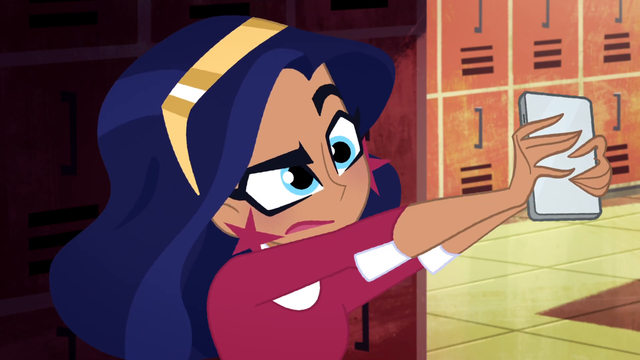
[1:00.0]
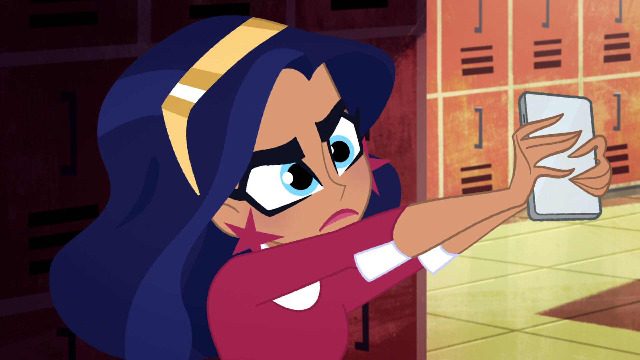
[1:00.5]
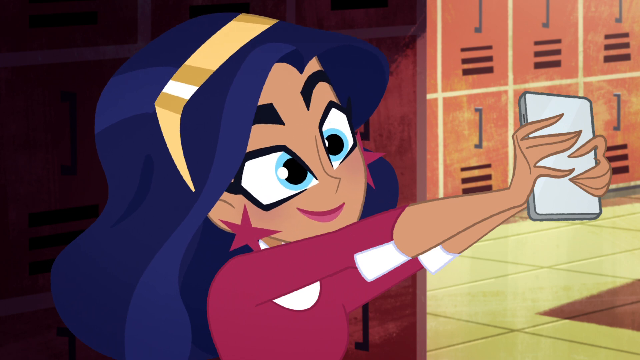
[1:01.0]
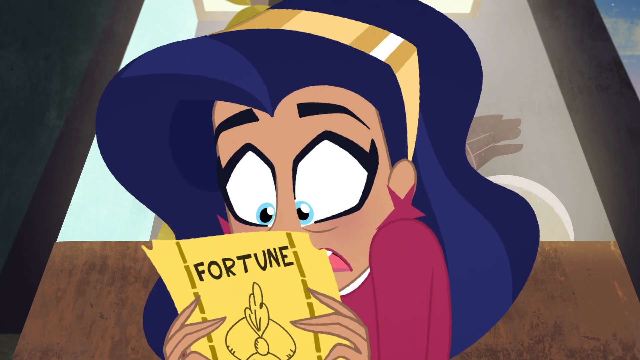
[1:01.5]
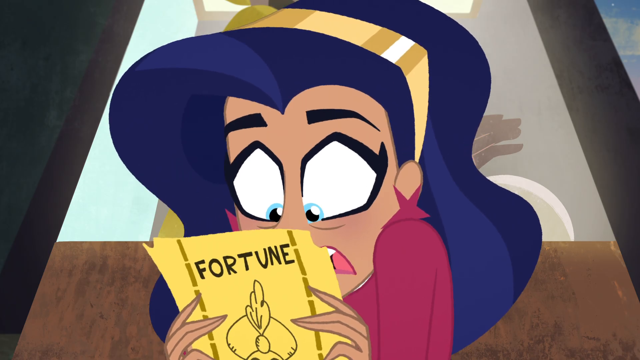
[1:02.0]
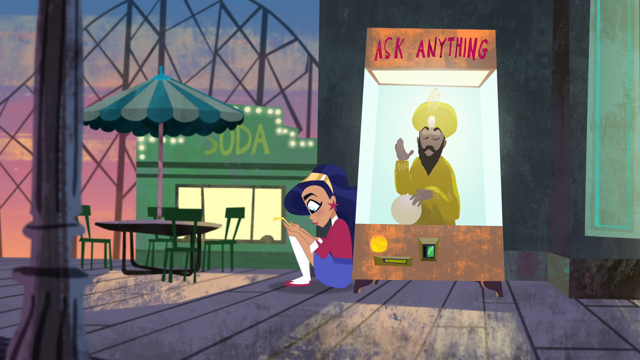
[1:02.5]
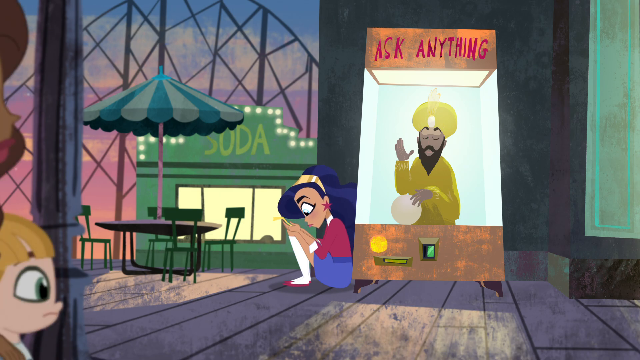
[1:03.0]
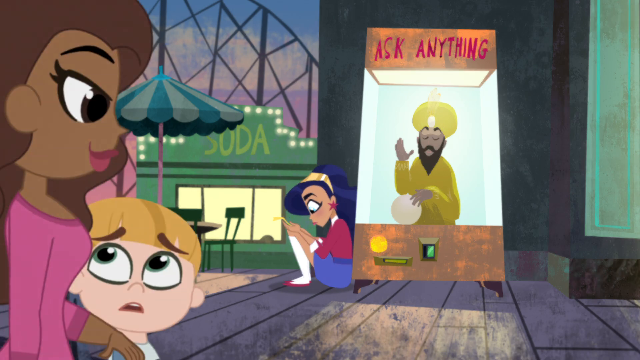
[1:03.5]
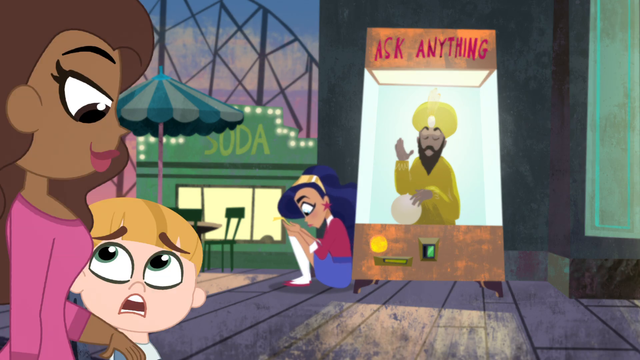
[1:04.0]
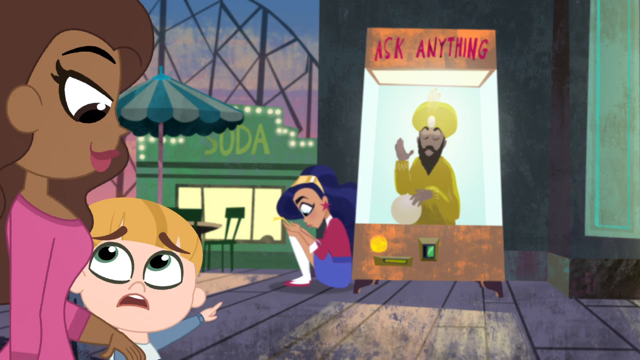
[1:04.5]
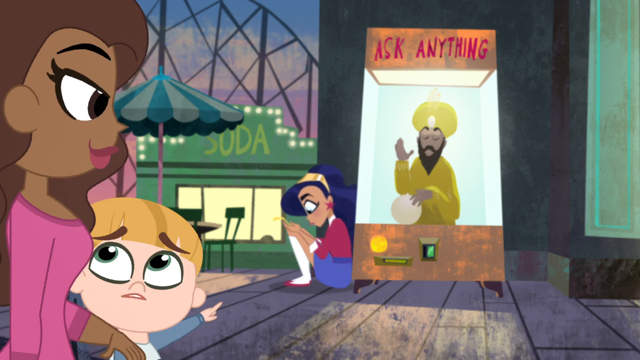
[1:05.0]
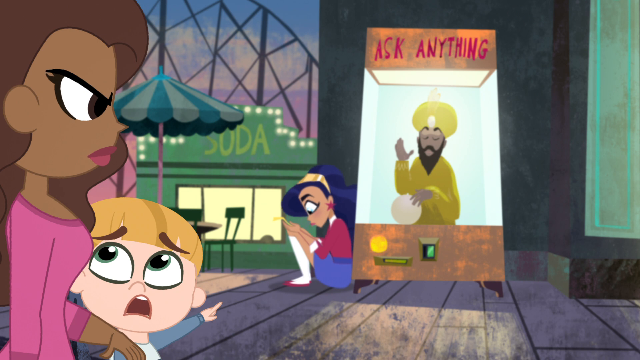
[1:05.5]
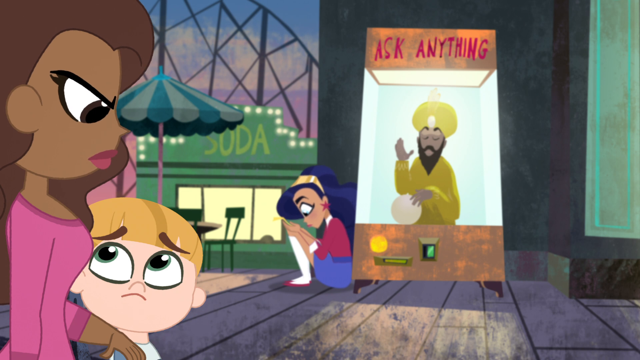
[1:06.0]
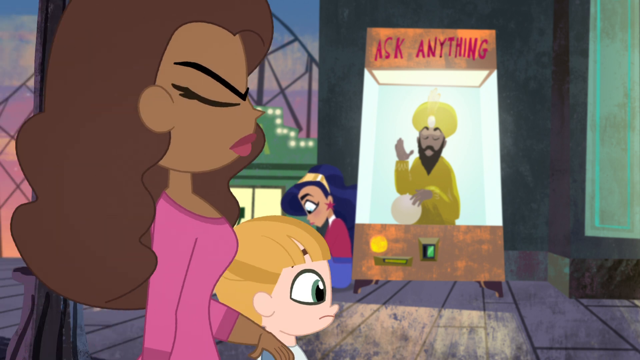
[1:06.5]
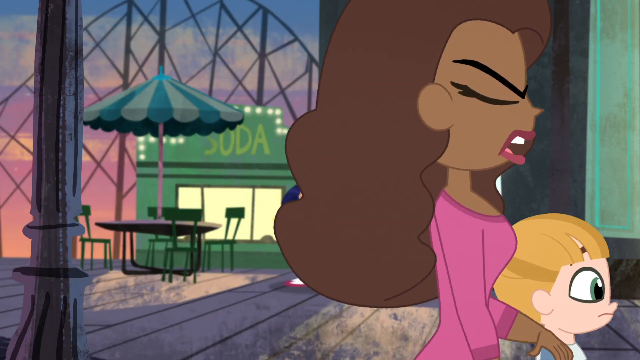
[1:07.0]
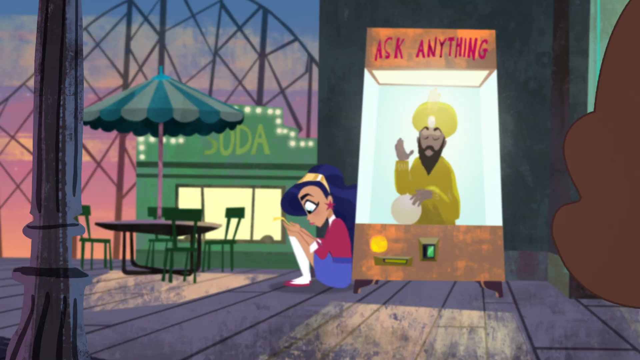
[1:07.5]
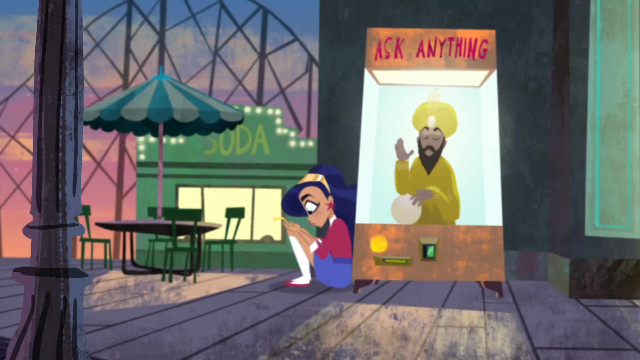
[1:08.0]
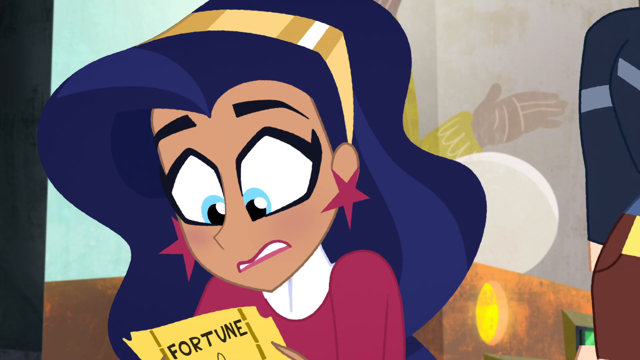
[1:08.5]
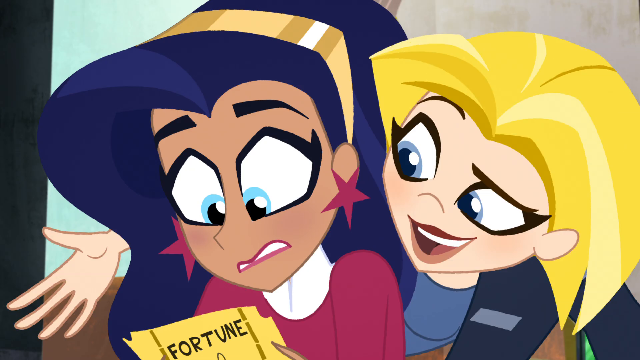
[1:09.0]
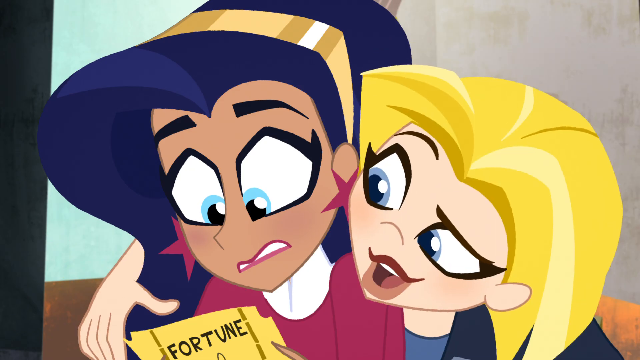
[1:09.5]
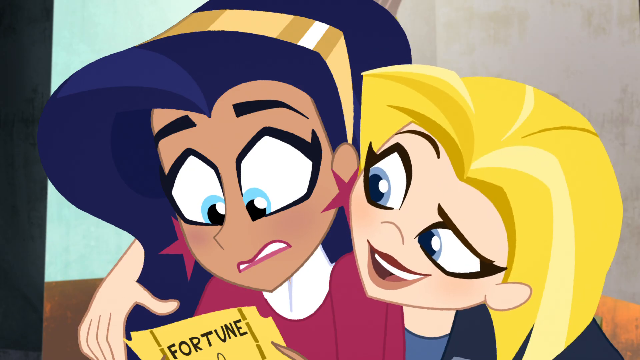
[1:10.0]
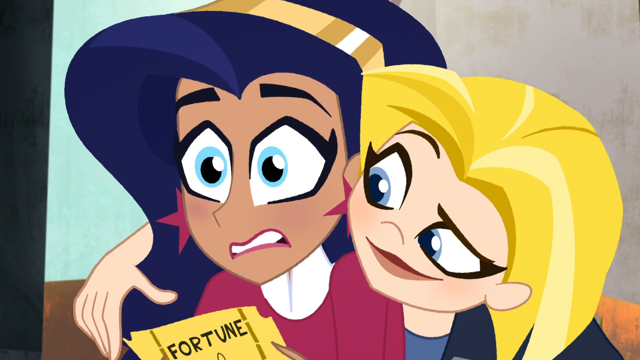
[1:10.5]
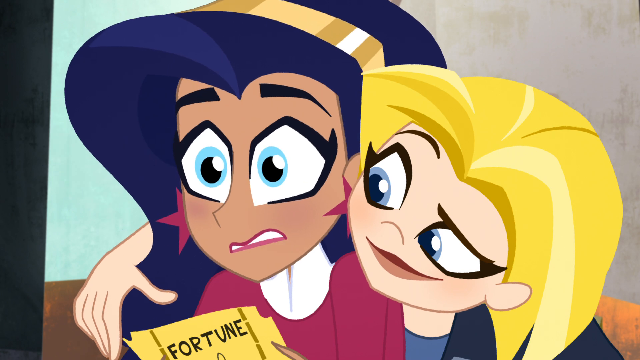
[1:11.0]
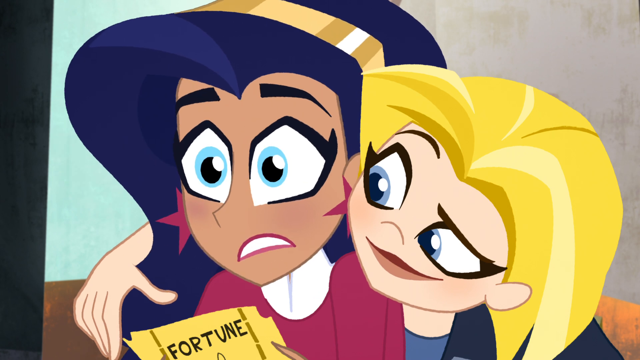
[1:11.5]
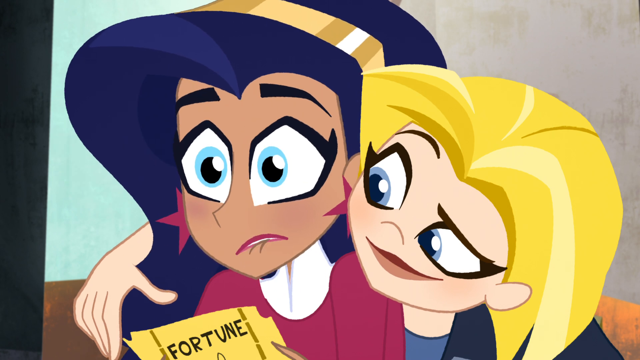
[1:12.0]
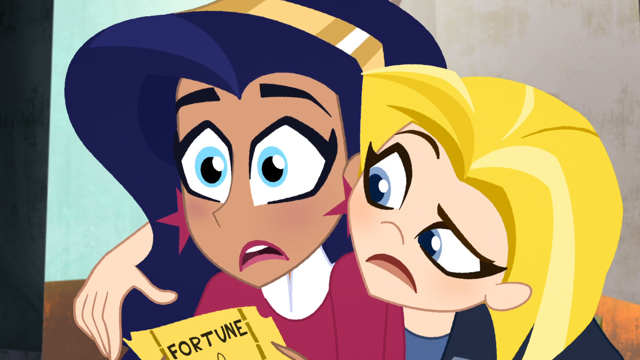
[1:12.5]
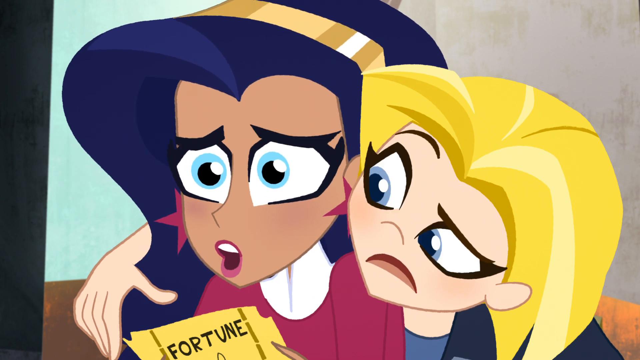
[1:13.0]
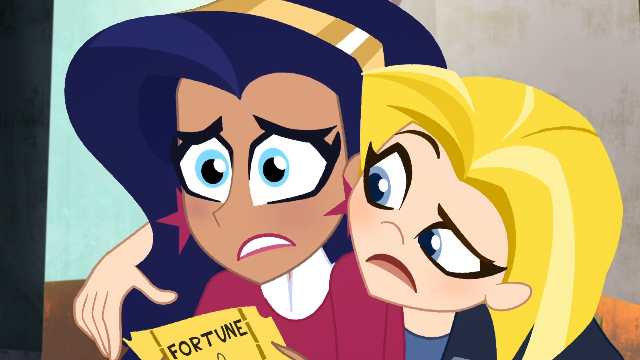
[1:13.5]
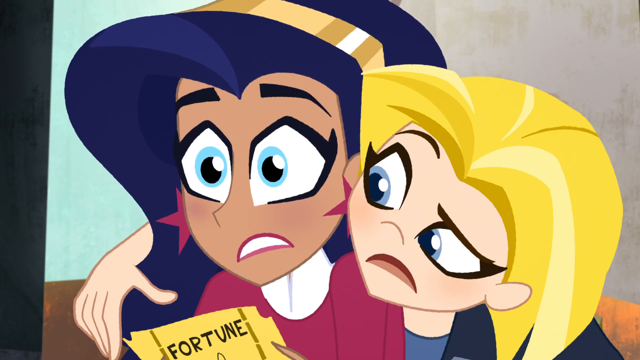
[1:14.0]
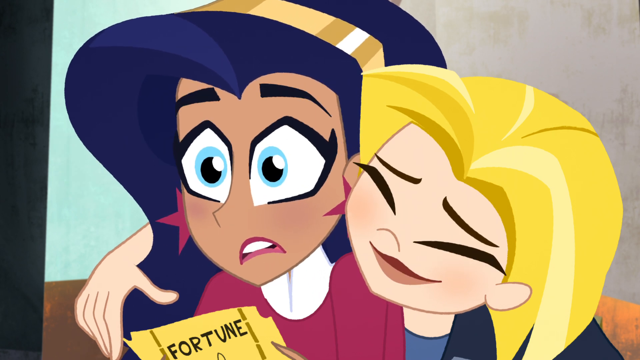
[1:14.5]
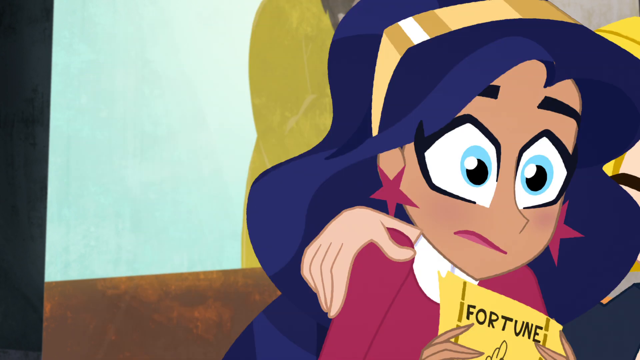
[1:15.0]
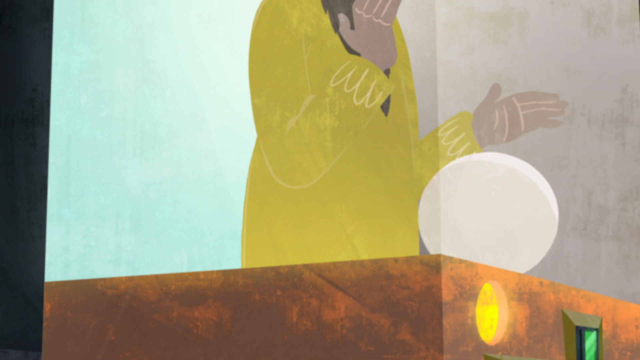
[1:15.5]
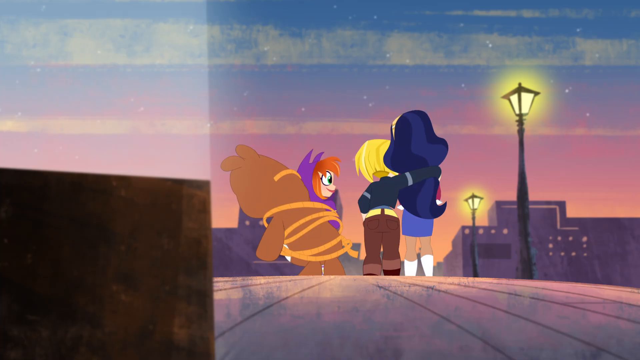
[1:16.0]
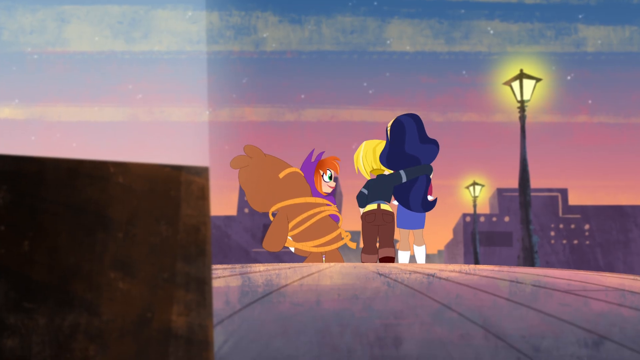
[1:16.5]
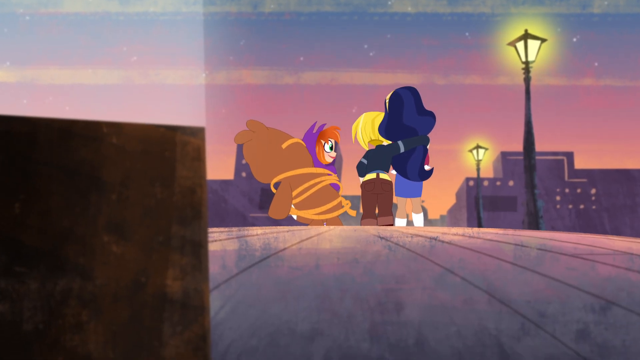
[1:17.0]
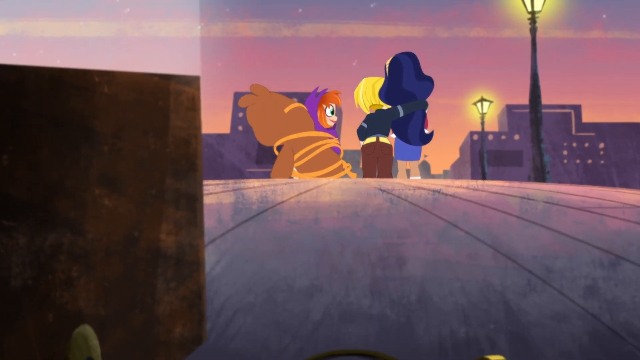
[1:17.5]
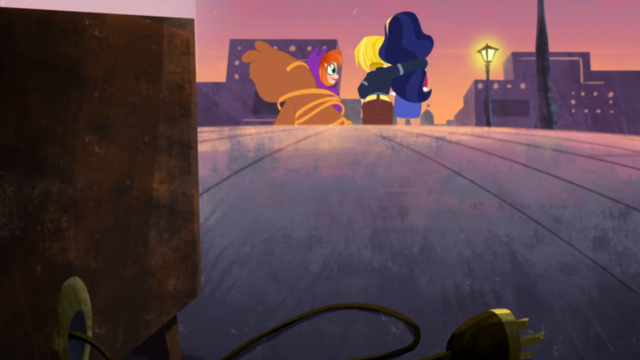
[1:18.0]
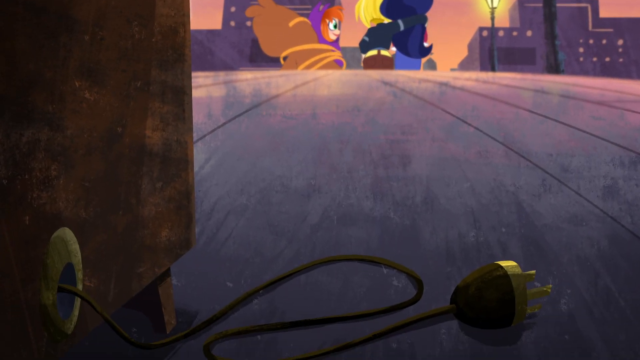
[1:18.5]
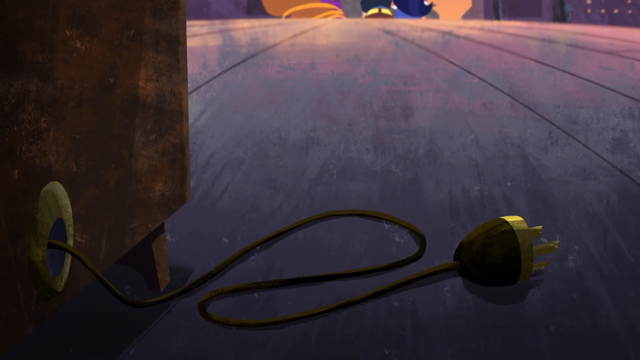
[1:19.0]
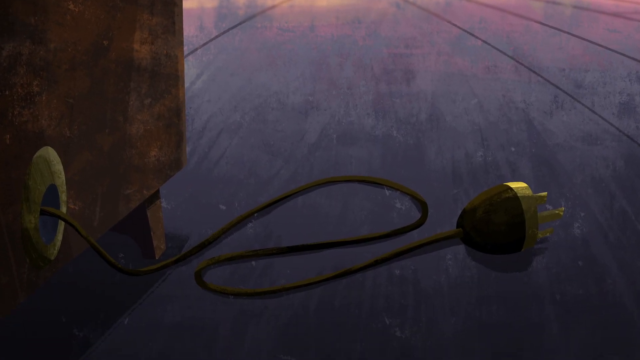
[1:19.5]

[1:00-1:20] The girl with blue hair sits on the ground next to the fortune-telling machine, reading the fortune she got from it. The fortune teller is dressed all in yellow, and above the machine are the words "ask anything." Two other characters stand to the side; one, apparently a young boy with blonde hair, points over at the girl. The kid's mother looks at them, and they quickly walk away. A character with yellow hair enters and hugs the blue-haired girl, and both look concerned as they talk to each other. Eventually they walk away together with the girl in the purple hoodie. The view then reveals that the fortune-telling machine was unplugged the entire time.